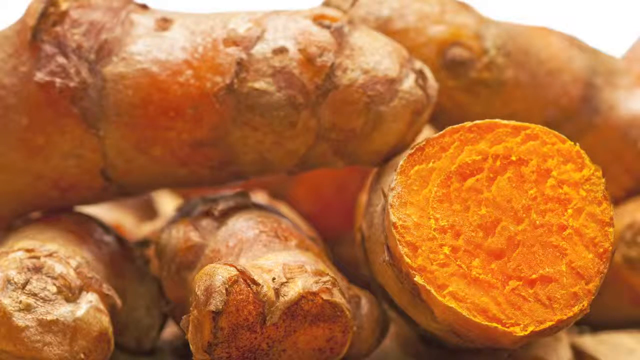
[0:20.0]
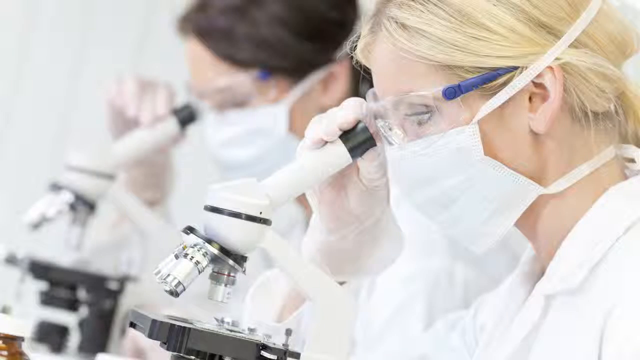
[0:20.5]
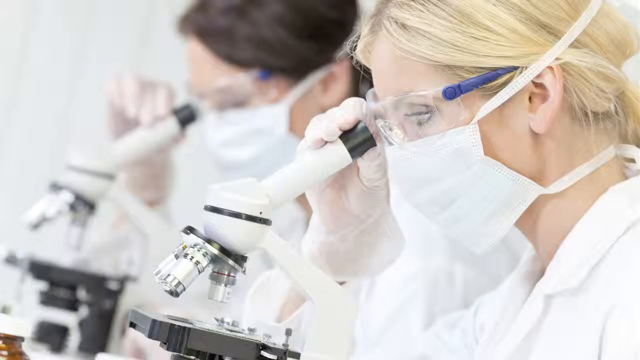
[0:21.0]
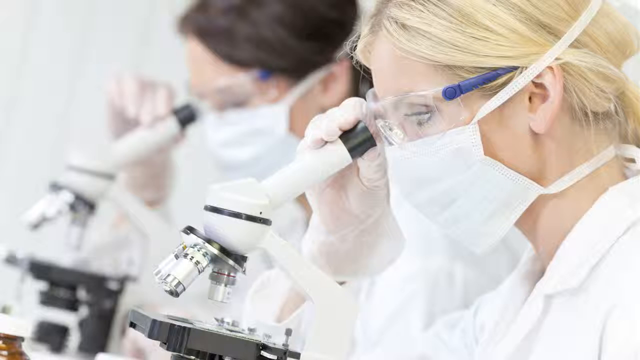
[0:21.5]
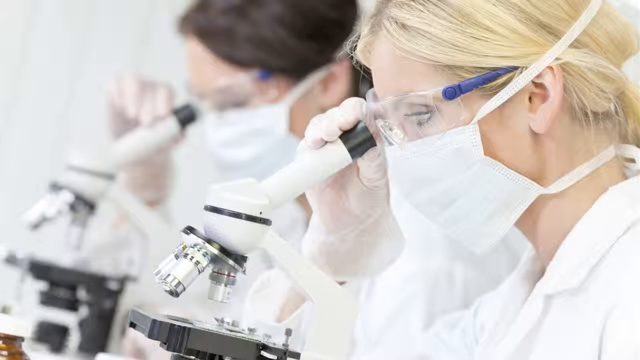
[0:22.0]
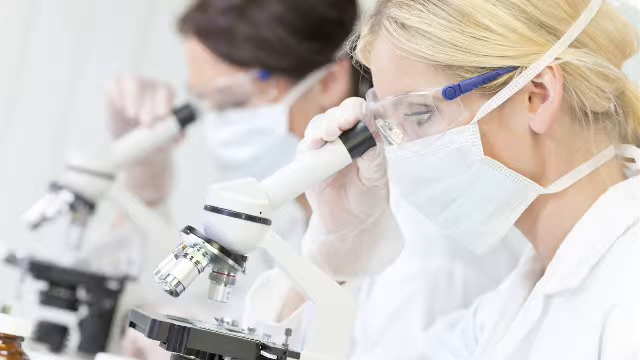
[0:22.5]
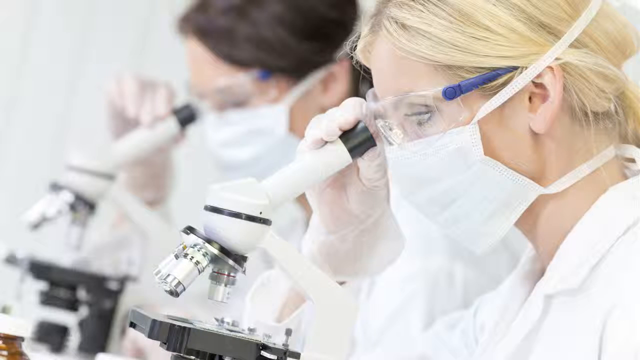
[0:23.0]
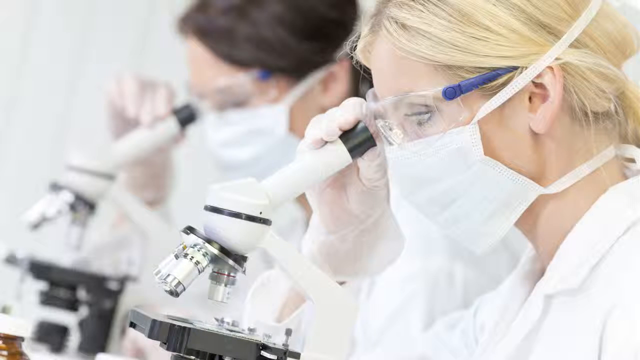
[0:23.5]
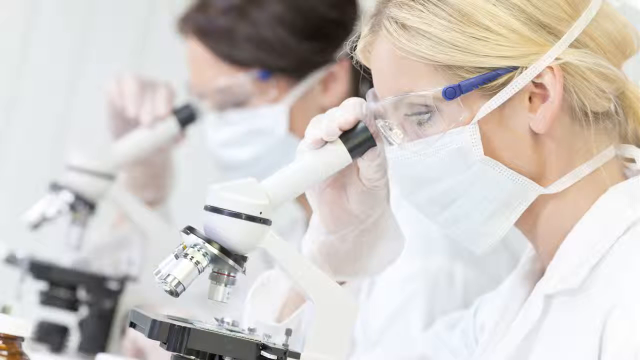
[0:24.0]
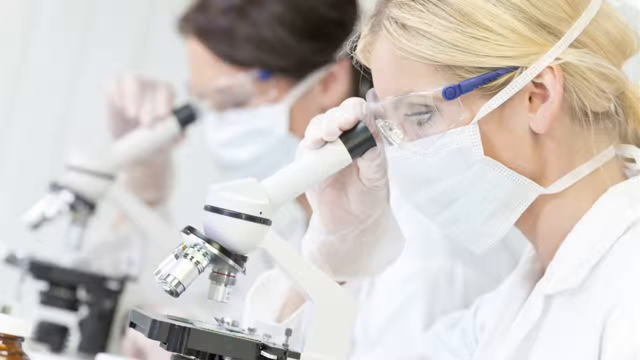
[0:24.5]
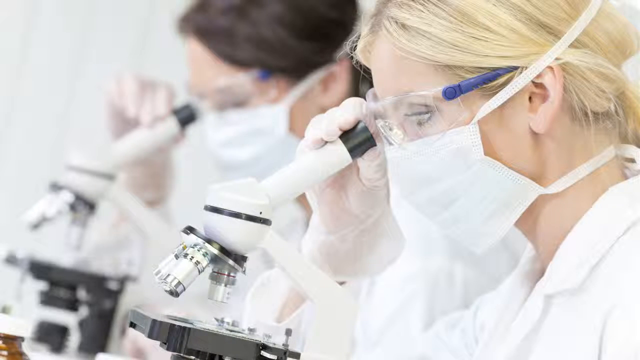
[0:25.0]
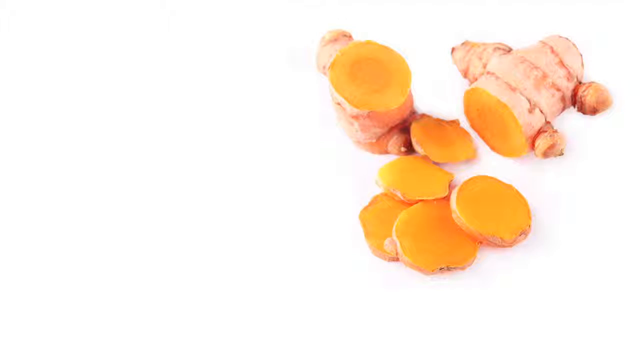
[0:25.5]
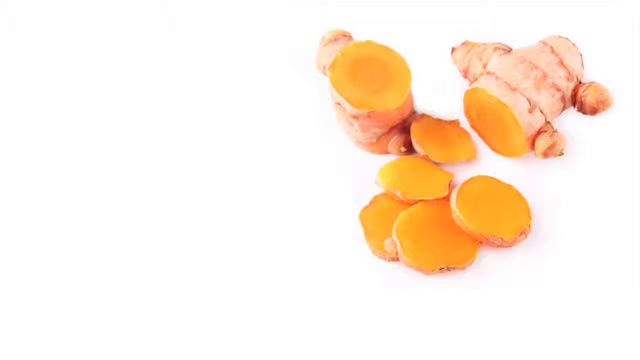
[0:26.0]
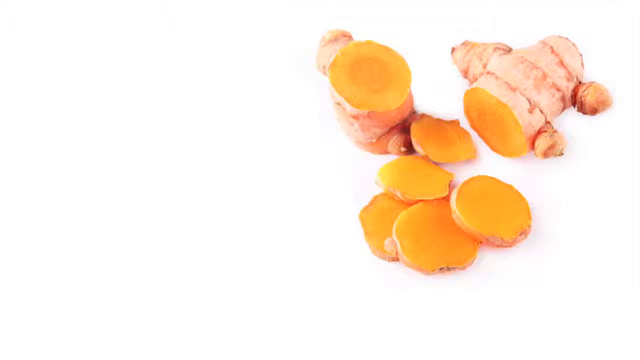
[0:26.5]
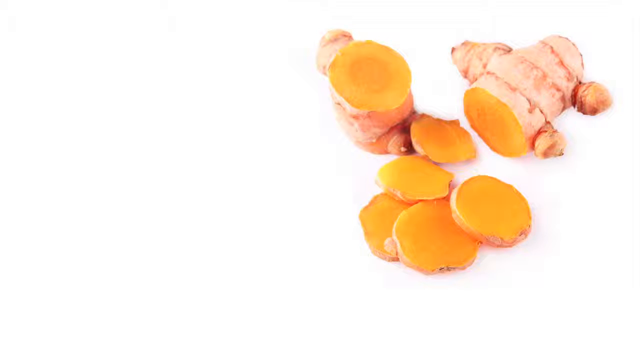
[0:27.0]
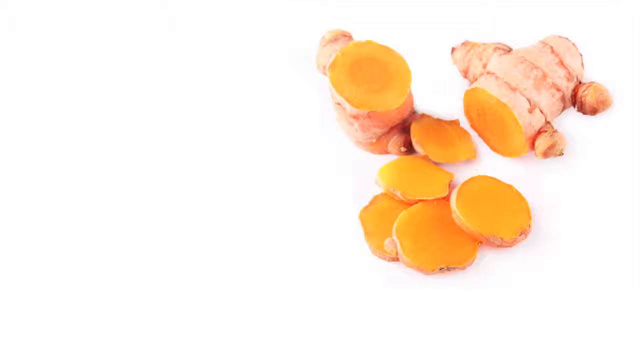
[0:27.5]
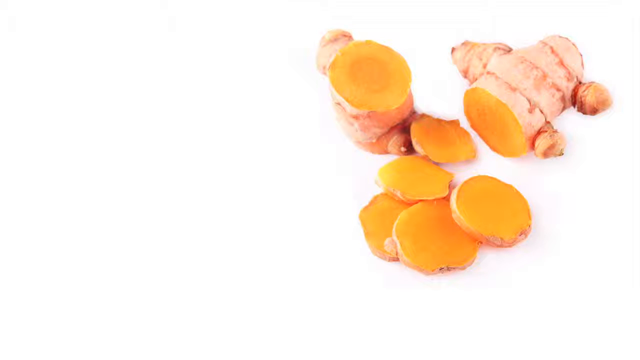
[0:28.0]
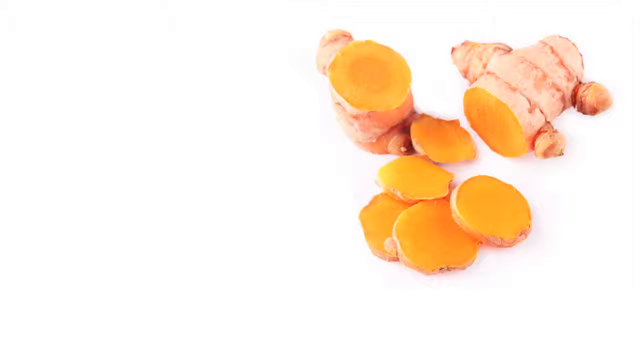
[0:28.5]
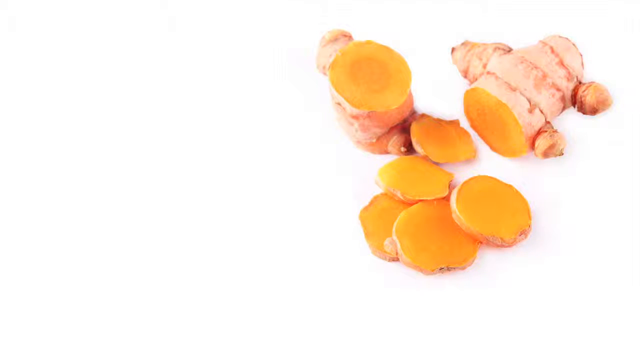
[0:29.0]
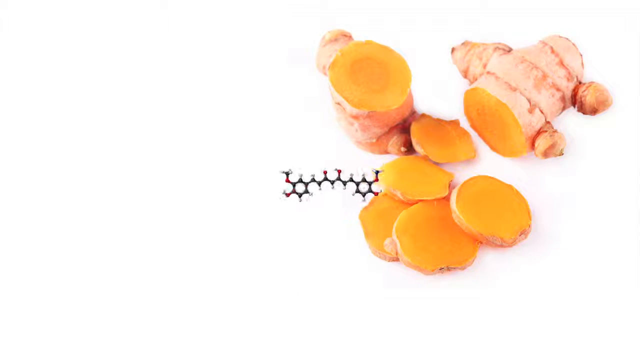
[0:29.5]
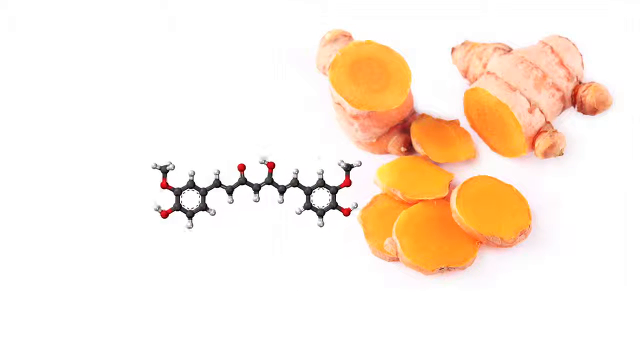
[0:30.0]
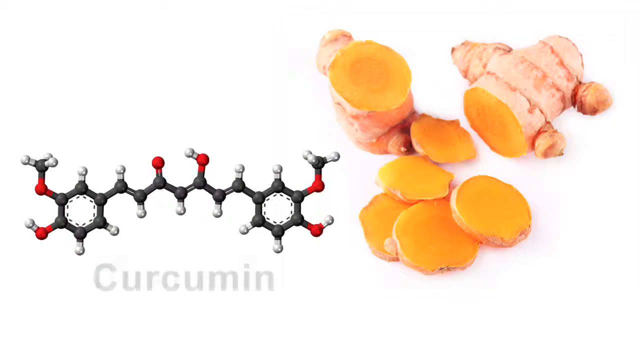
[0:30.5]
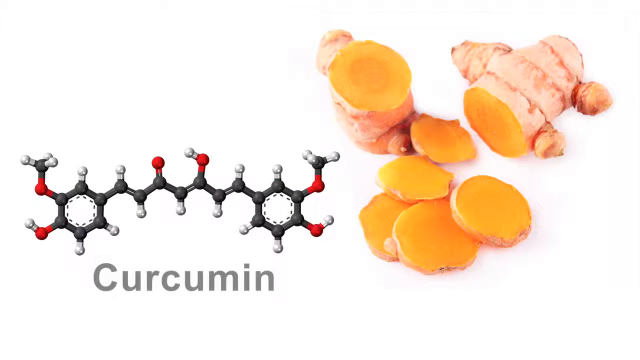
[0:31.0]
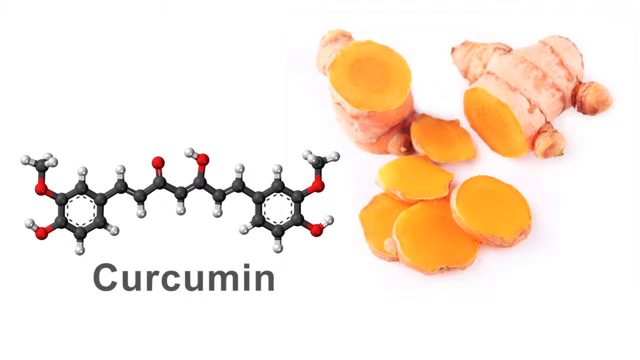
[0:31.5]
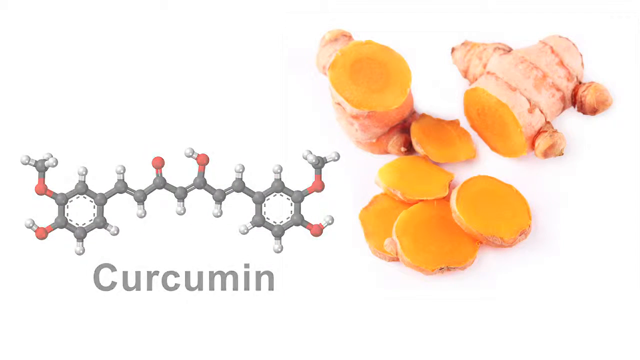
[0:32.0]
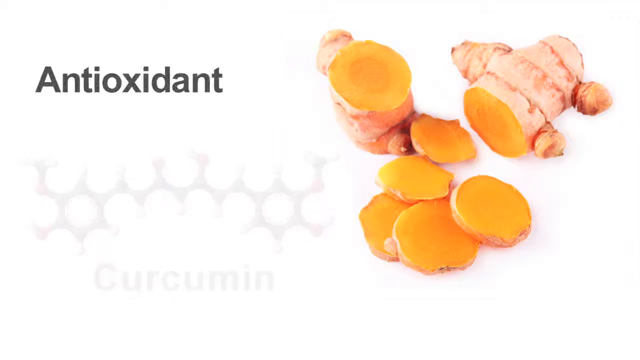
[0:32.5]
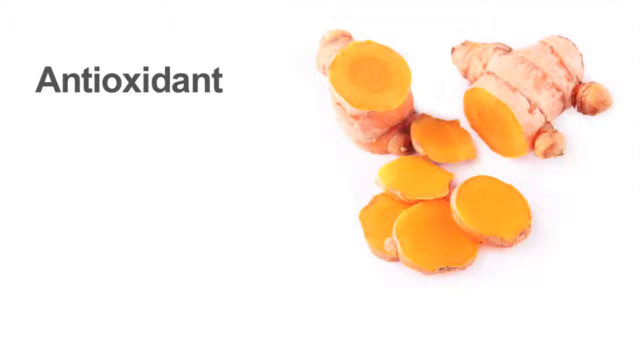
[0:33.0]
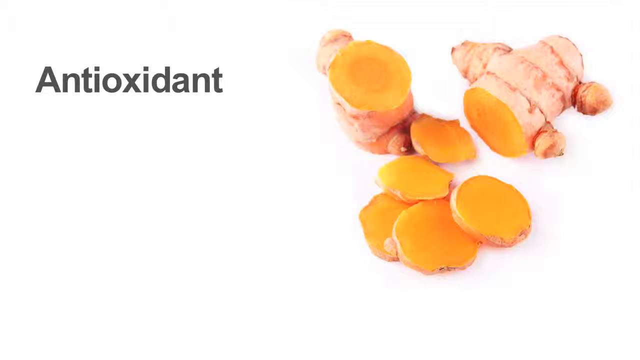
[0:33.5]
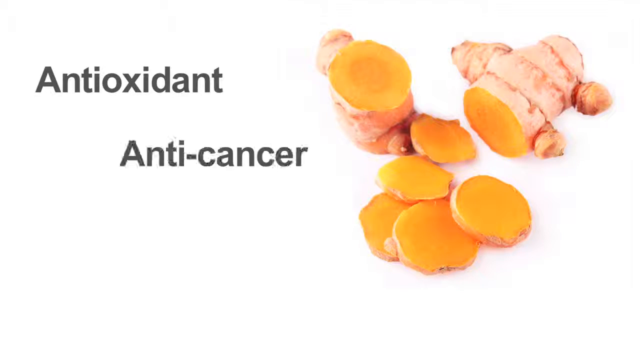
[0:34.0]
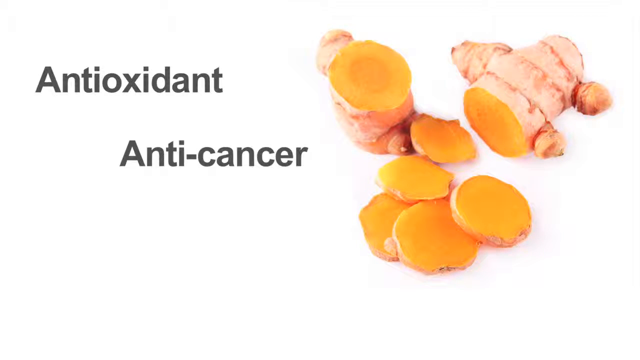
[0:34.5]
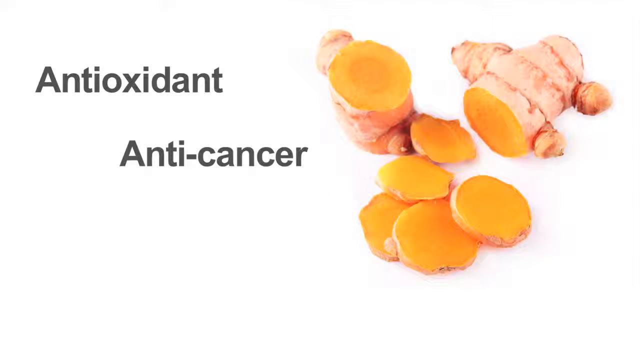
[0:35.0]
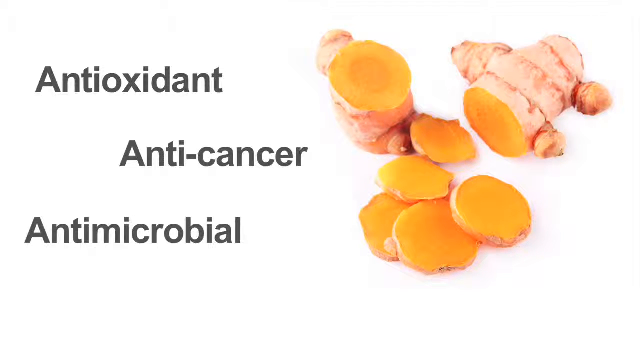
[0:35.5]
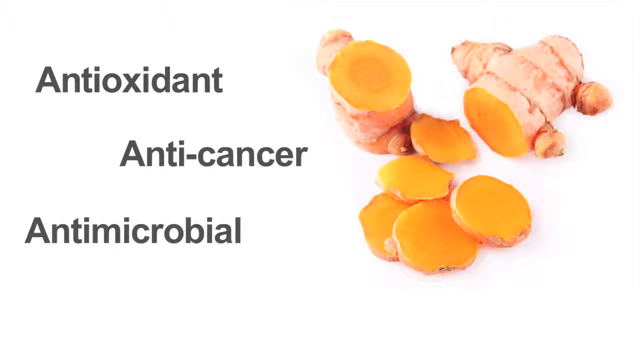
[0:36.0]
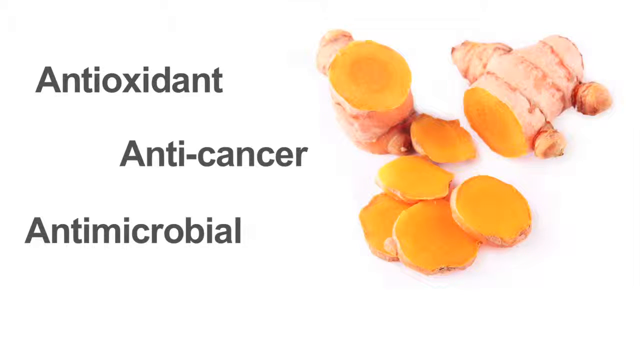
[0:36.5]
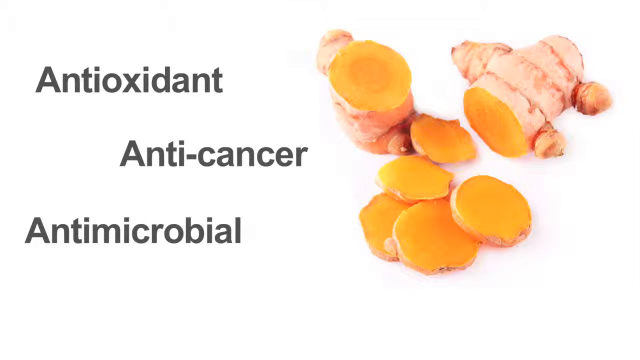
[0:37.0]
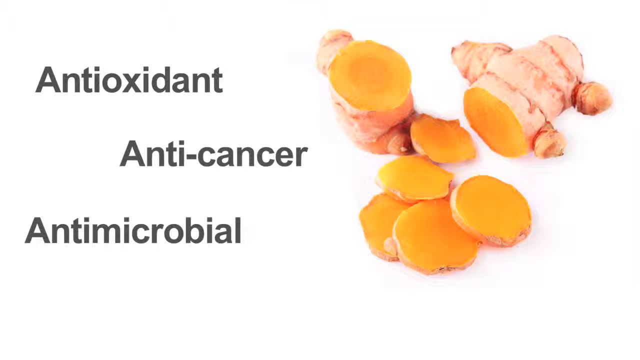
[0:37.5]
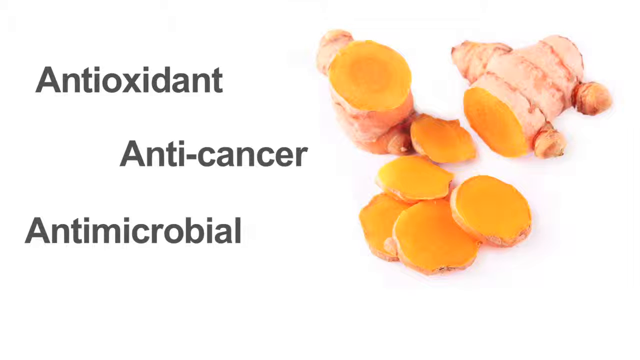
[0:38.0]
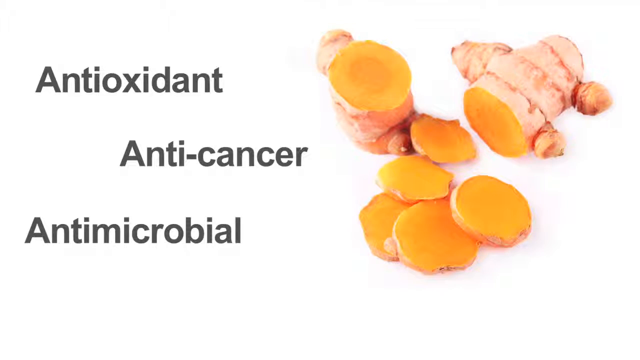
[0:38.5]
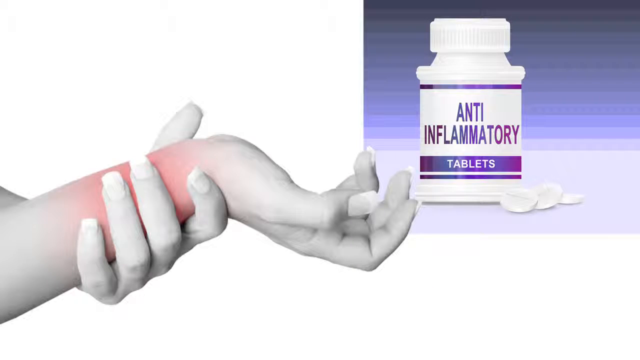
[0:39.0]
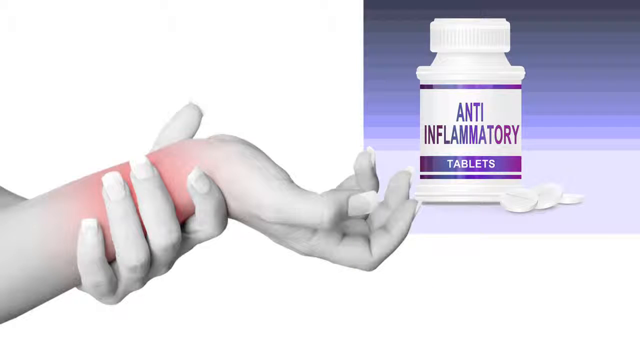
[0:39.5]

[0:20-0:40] Two women sit side by side looking into microscopes. The one in front on the right has blonde hair, and the one toward the left, behind her, has brown hair. Both wear white surgical masks, lab coats, transparent protective eyewear and surgical gloves. Each holds the magnifying lens with her right hand between thumb and fingers and stares into the microscope with her right eye. Next, a turmeric plant is shown, a plant that looks like the ginger root plant. Text on the left shows "Curcumin", followed by the words "Antioxidant", "Anti-cancer" and "Antimicrobial". Then a woman holds her right wrist with her left hand; her right hand faces palm up with the fingers slightly curled upward, and her wrist is shaded red, indicating inflammation. On the right is a white pill bottle with purple writing reading "Anti-inflammatory" and "tablets".